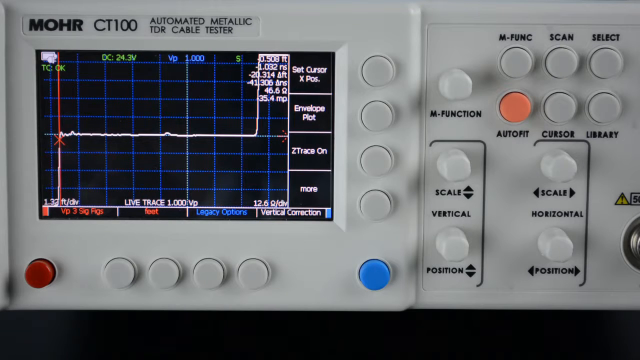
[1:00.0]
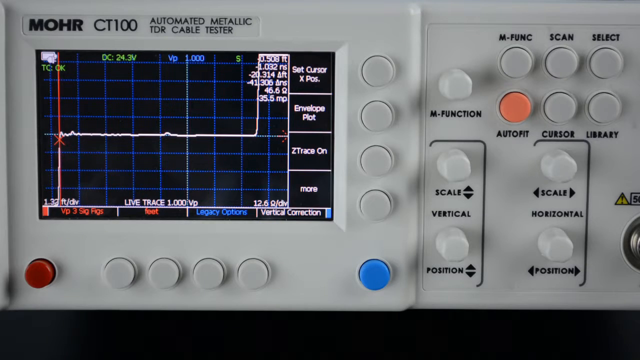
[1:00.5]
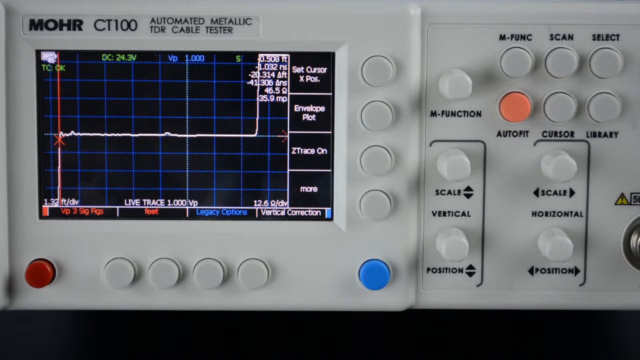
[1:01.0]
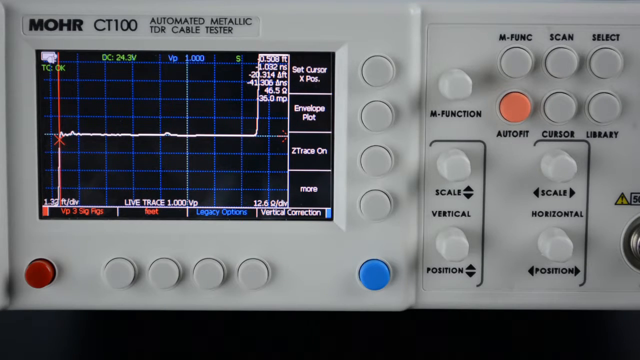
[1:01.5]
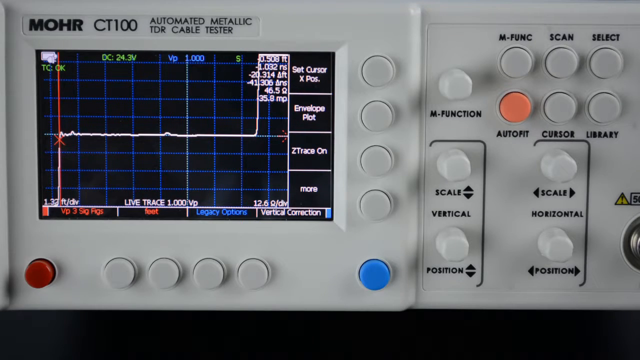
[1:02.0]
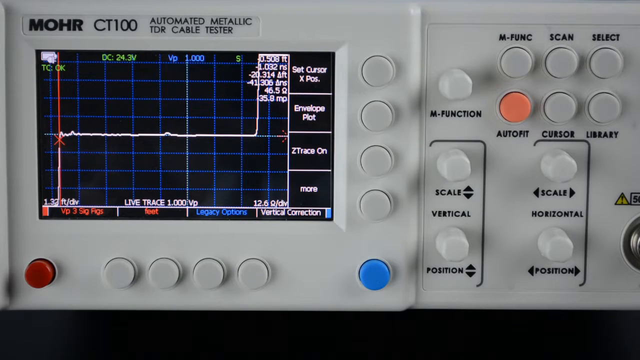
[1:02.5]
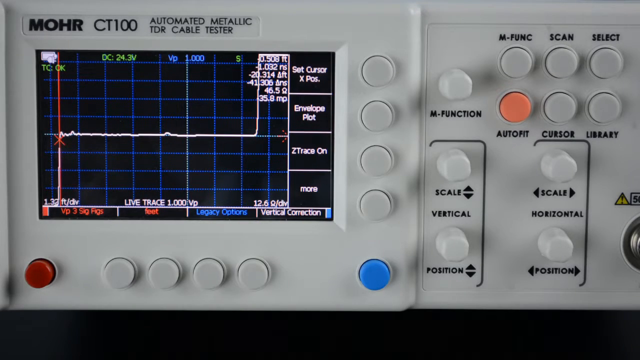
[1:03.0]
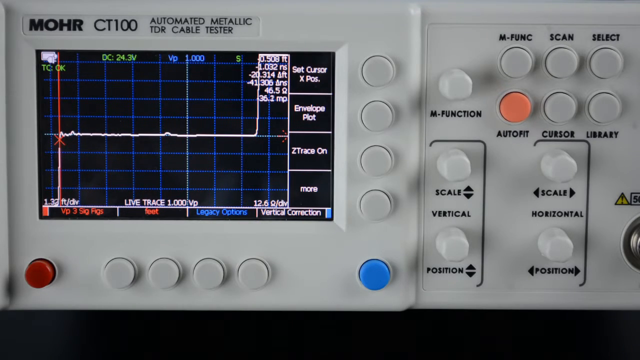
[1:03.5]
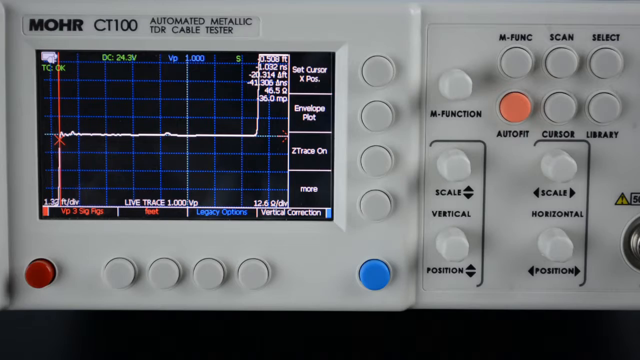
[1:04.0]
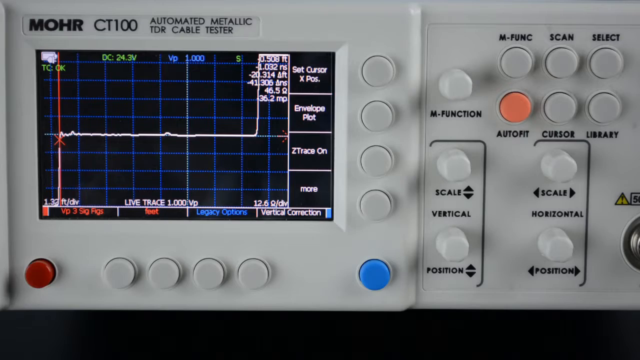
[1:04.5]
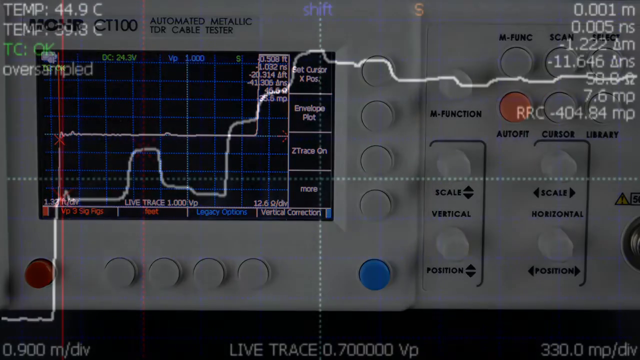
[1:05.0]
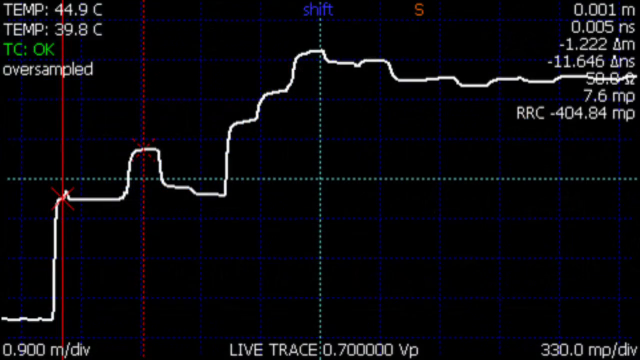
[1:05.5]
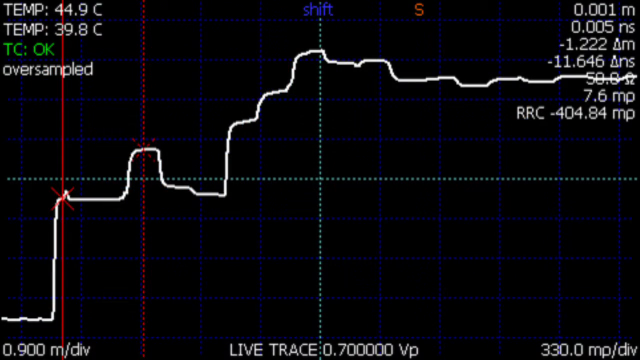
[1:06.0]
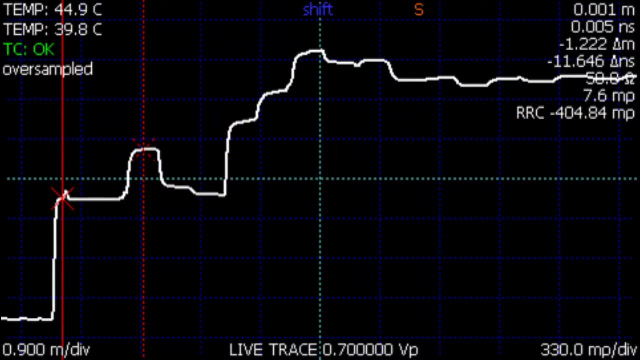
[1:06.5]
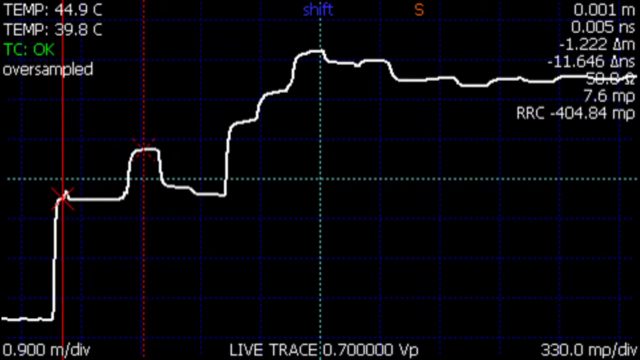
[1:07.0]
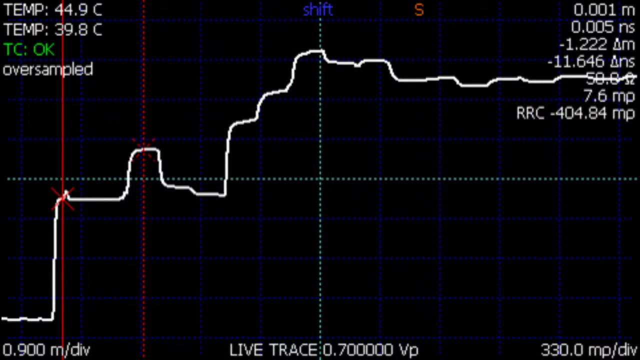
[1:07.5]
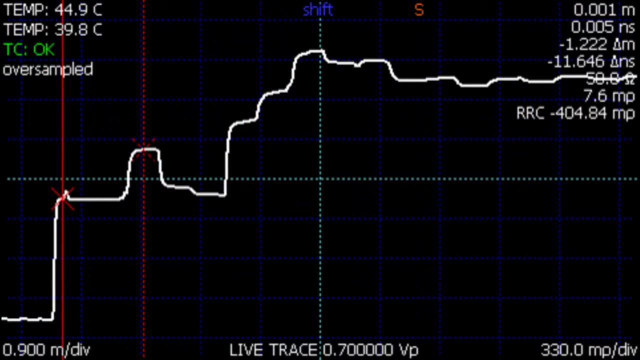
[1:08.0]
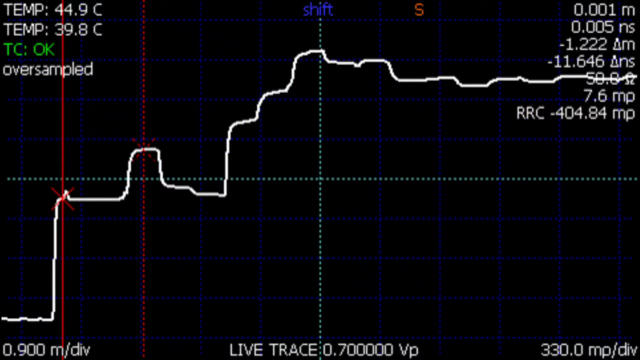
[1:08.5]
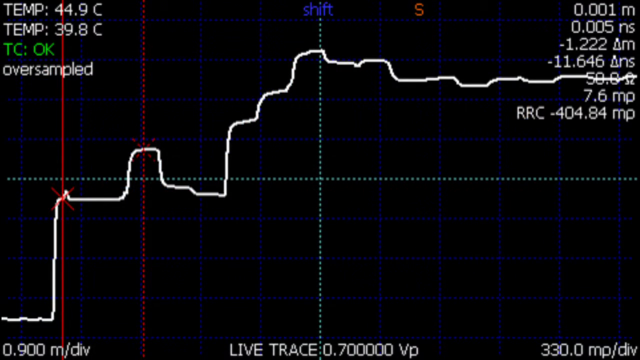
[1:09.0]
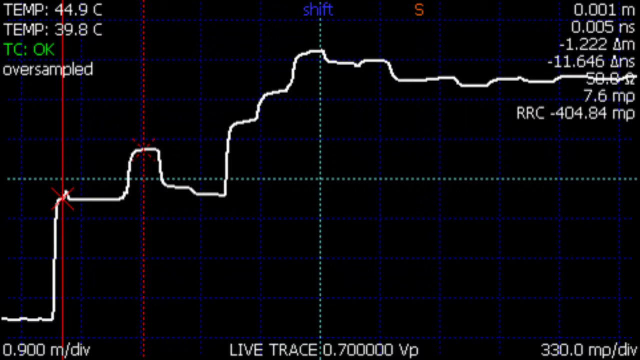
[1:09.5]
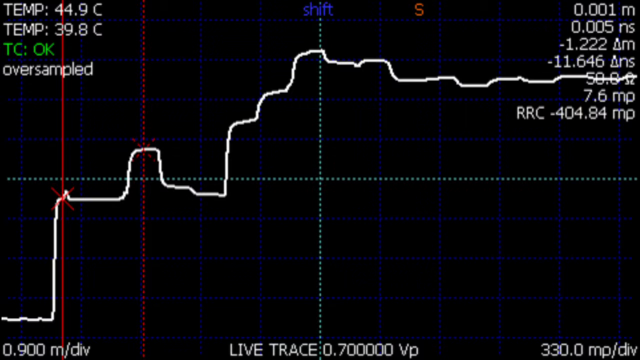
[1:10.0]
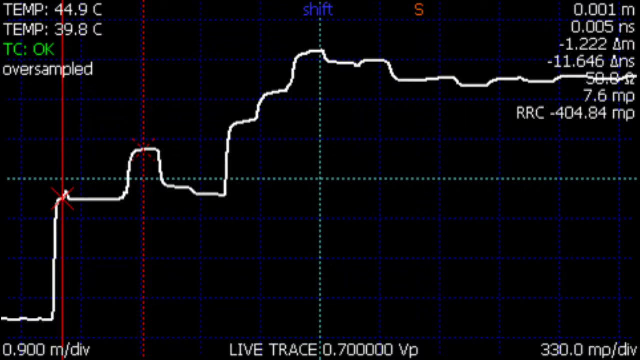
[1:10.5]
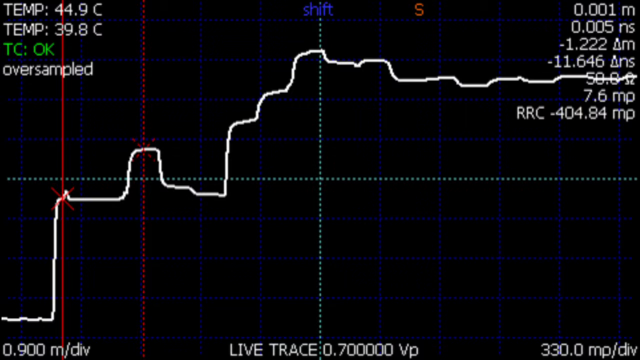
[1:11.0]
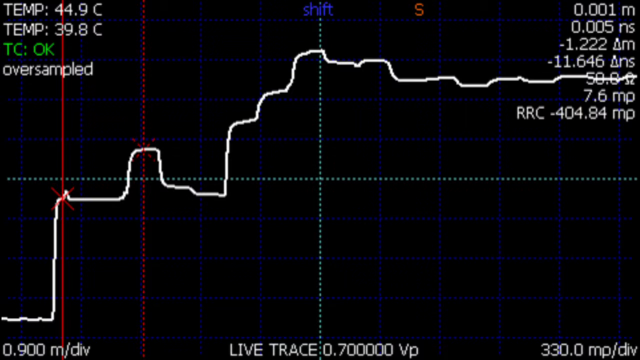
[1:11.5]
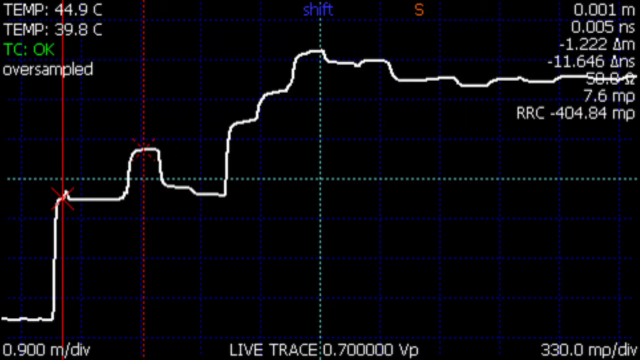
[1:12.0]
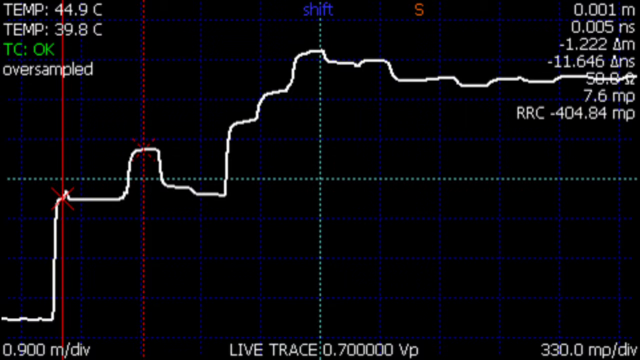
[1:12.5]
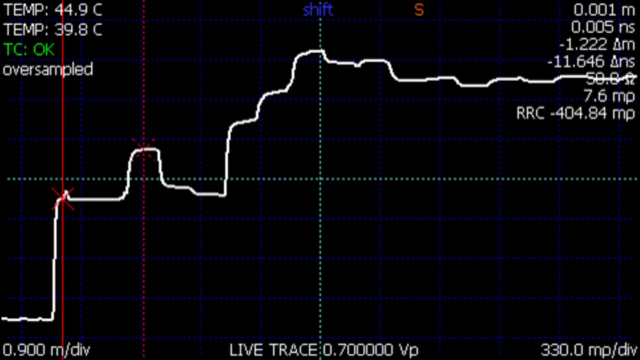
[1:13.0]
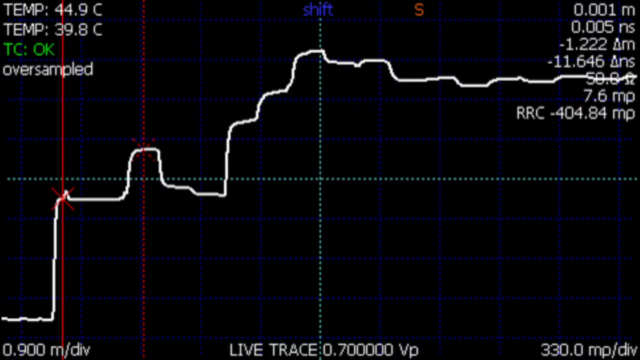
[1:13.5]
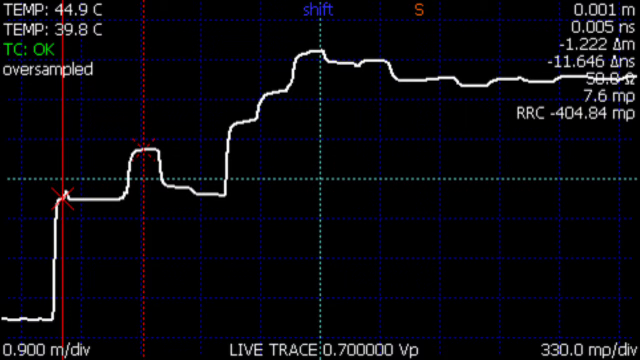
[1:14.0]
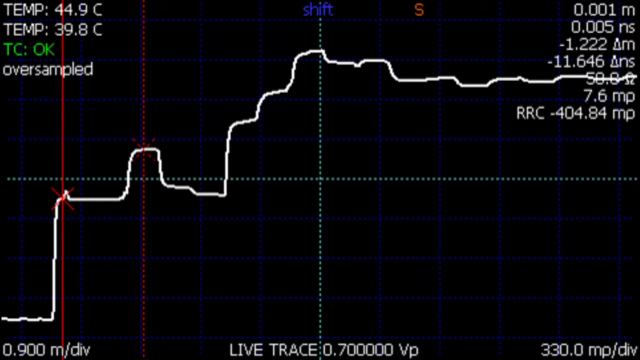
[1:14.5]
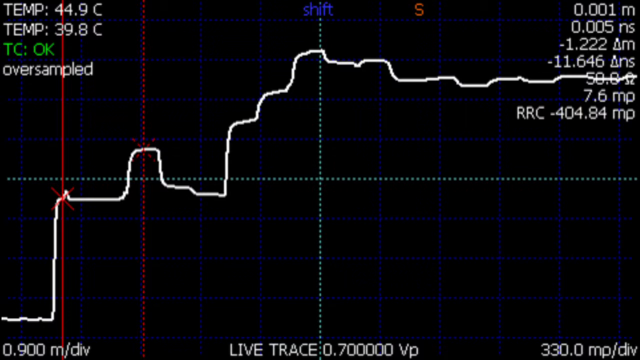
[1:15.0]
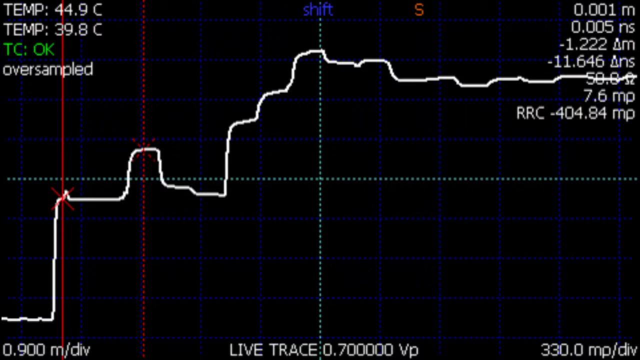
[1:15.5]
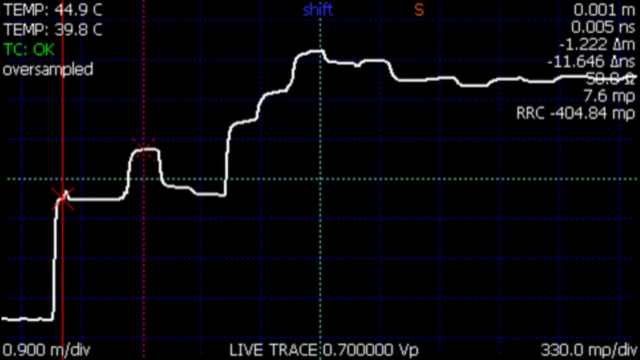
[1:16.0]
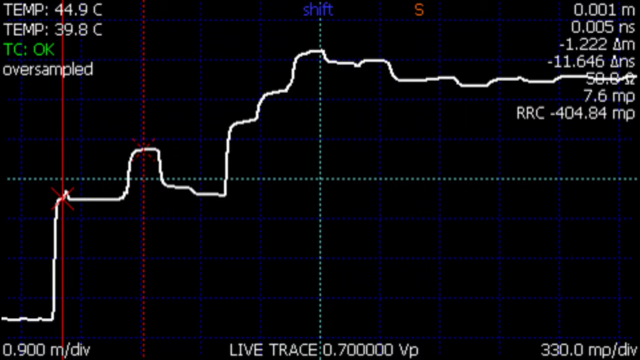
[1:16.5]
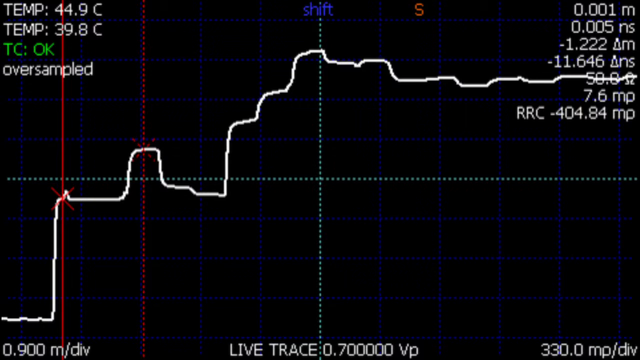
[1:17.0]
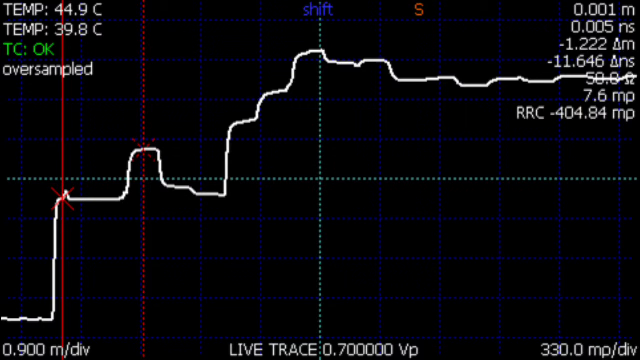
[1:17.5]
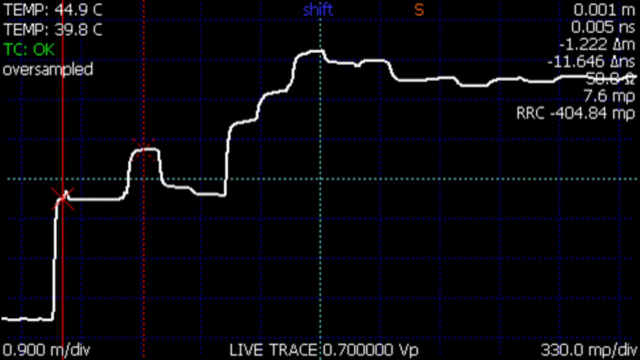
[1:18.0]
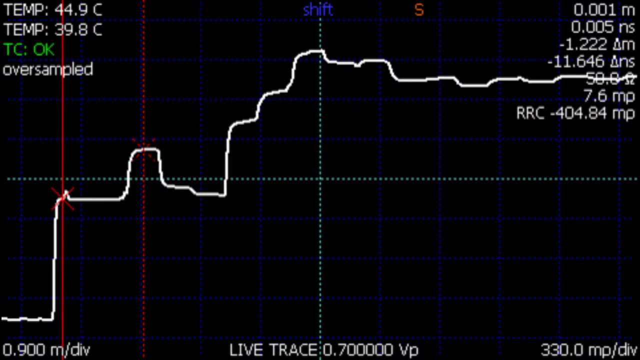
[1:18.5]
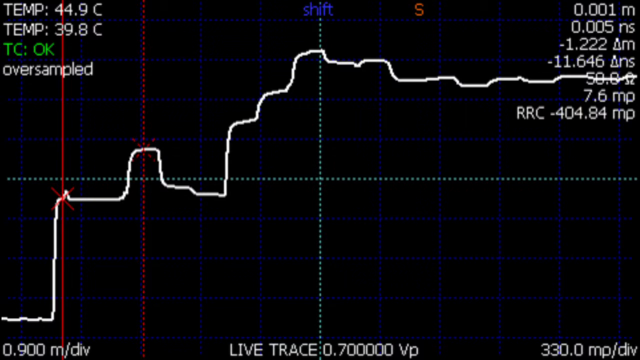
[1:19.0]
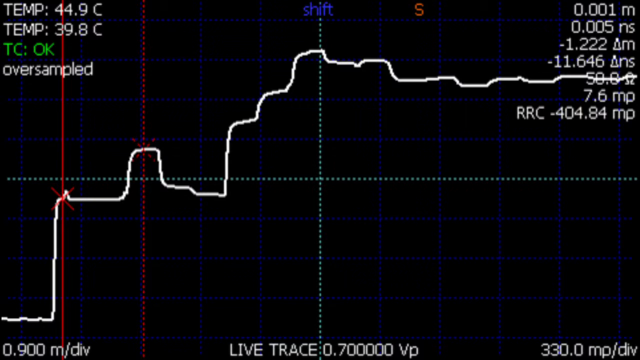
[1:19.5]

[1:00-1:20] A static view shows an automated cable tester with a small rectangular LCD screen on its left-hand side, surrounded by buttons along the bottom and right side of the screen. The screen has a square lined grid, with statistics written in various places around its outer edge and a list of six different statistics on the right side; one of these is moving while the others appear to stay the same. The video then transitions to a close-up of the LCD screen, though this view is slightly different from the one on the device. The screen has a black background, temperature statistics in the top left-hand corner, and more statistics listed in the top right-hand corner. A solid white line runs across the screen; it is curved with ups and downs, starting from the bottom and gradually getting higher as it moves horizontally across the screen. The screen appears to be static, so this is likely just an image of the testing device's output.